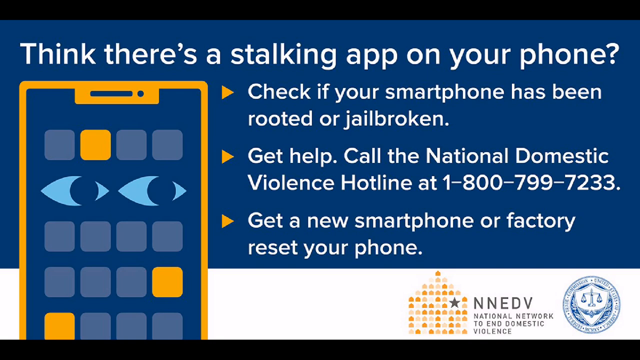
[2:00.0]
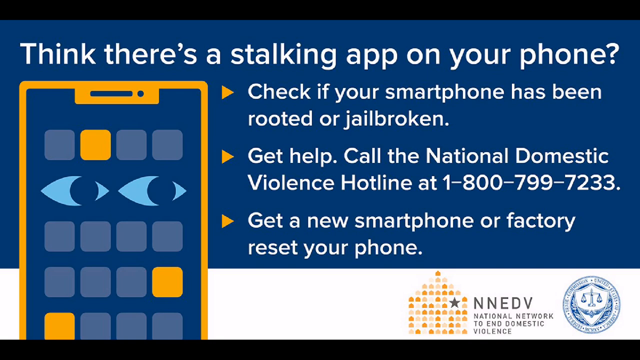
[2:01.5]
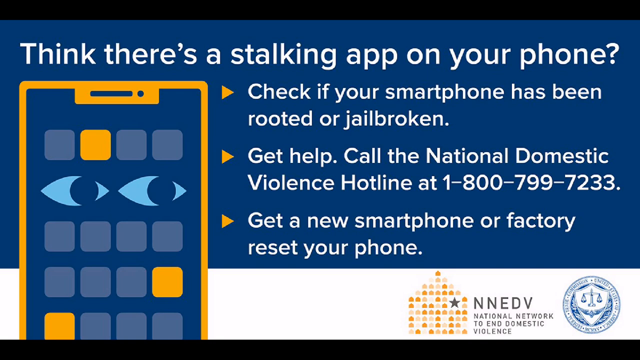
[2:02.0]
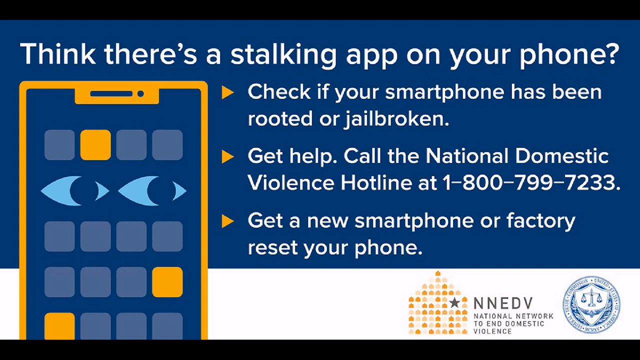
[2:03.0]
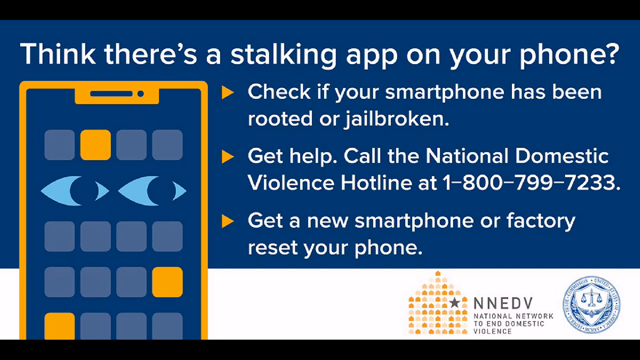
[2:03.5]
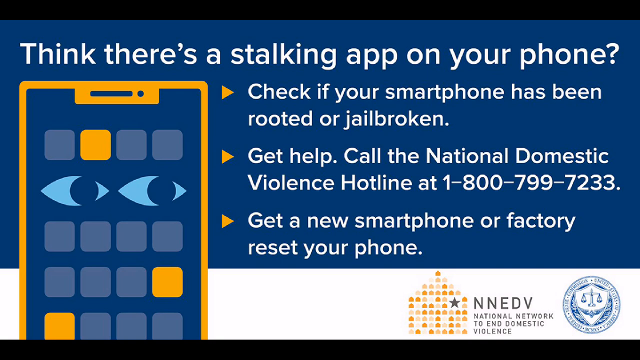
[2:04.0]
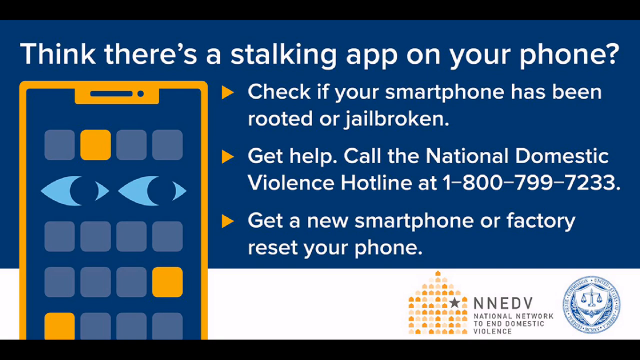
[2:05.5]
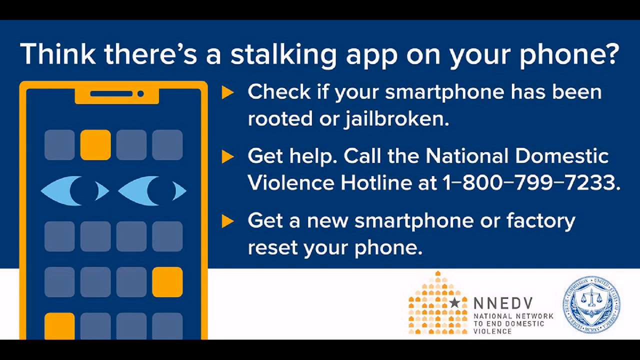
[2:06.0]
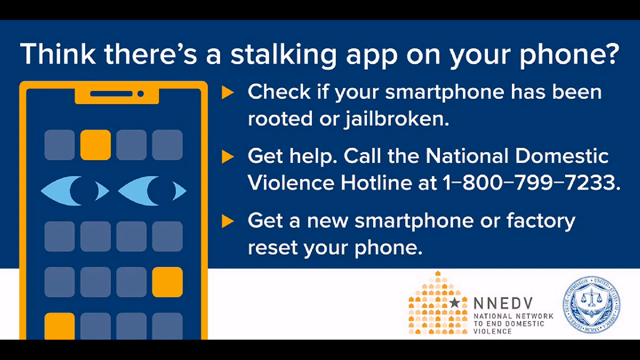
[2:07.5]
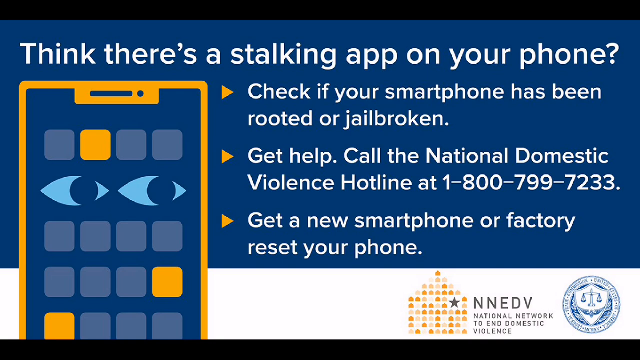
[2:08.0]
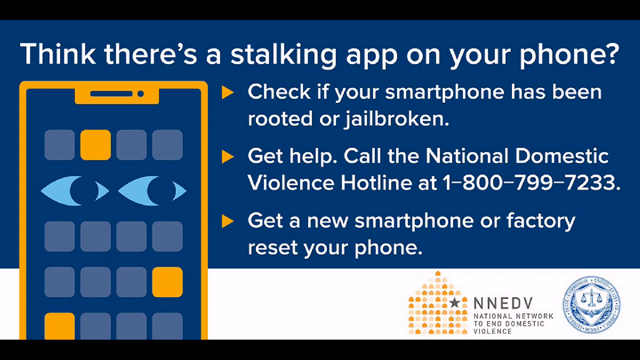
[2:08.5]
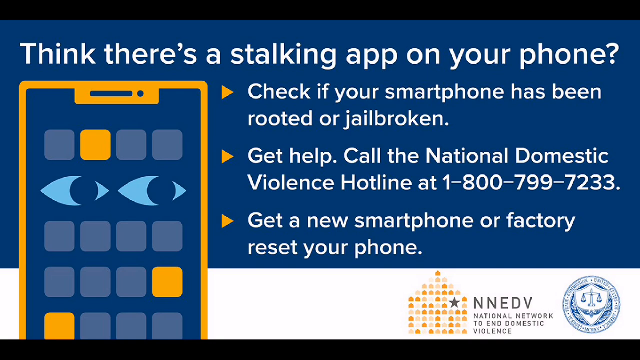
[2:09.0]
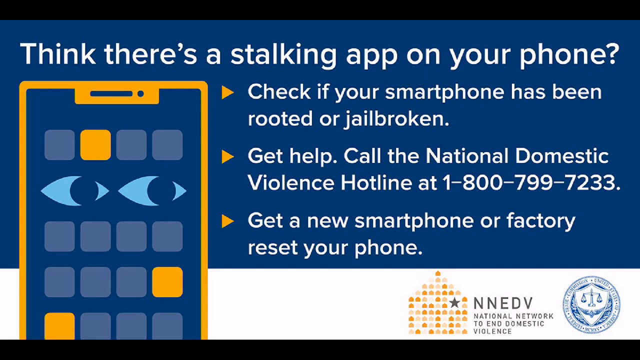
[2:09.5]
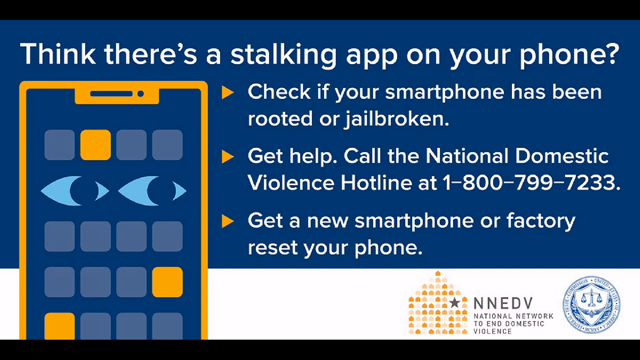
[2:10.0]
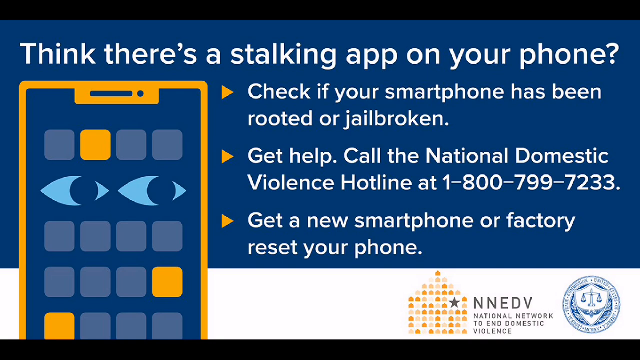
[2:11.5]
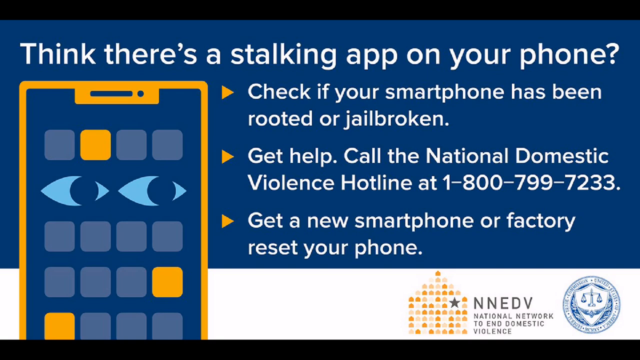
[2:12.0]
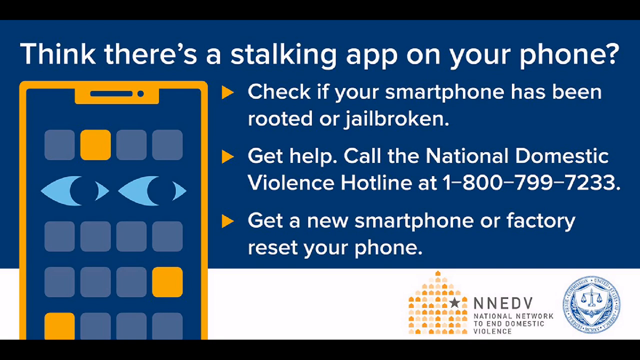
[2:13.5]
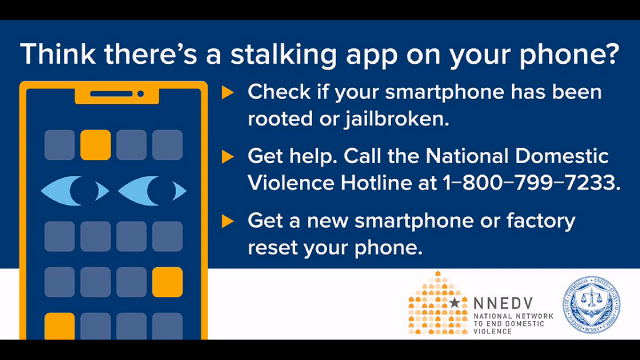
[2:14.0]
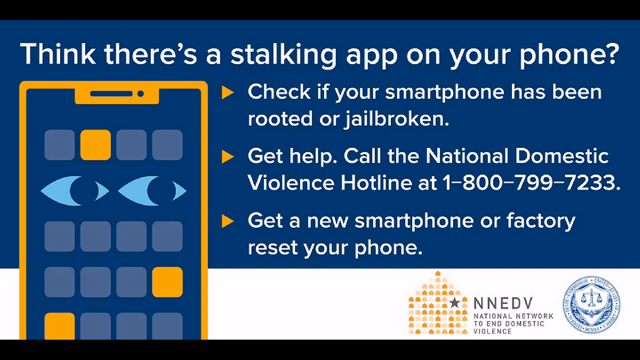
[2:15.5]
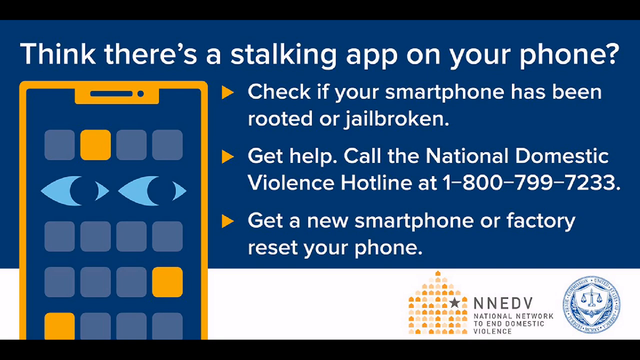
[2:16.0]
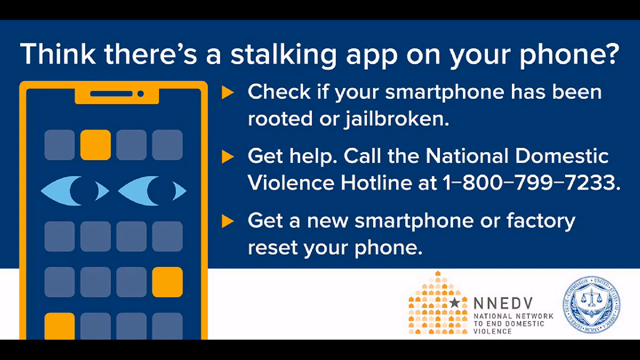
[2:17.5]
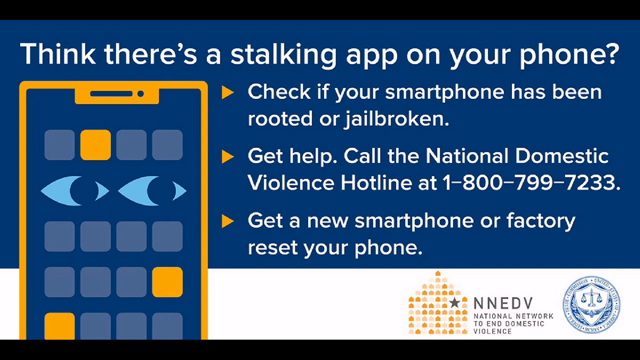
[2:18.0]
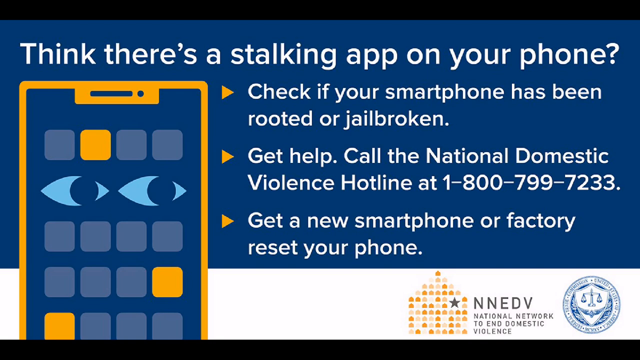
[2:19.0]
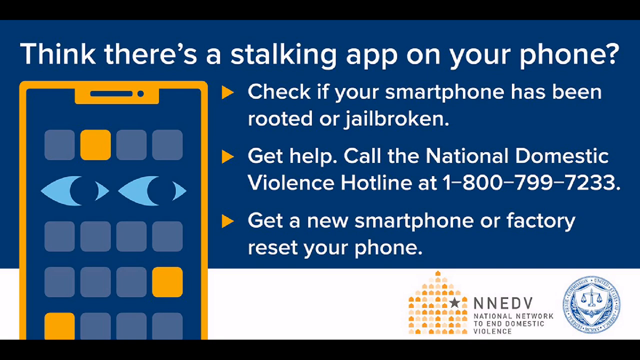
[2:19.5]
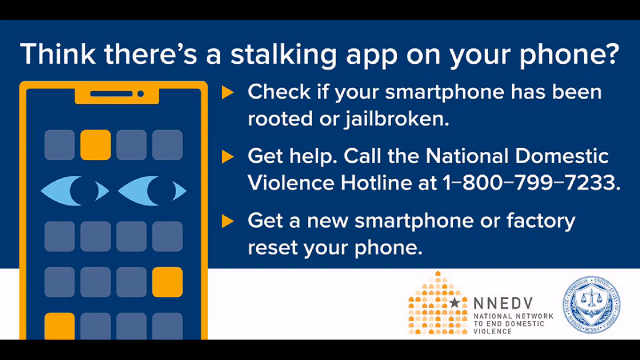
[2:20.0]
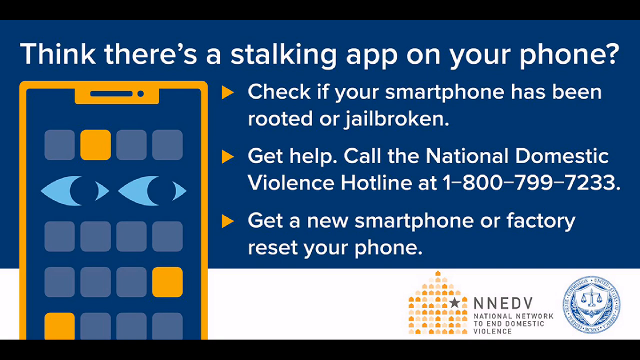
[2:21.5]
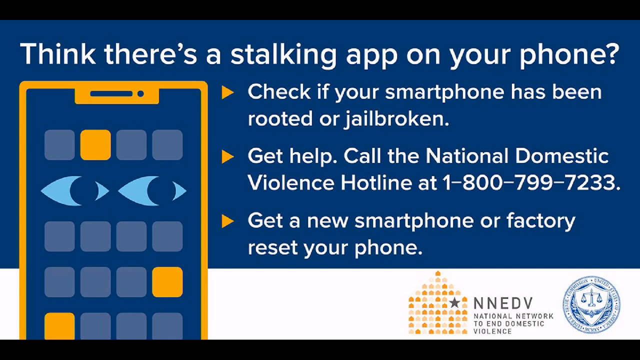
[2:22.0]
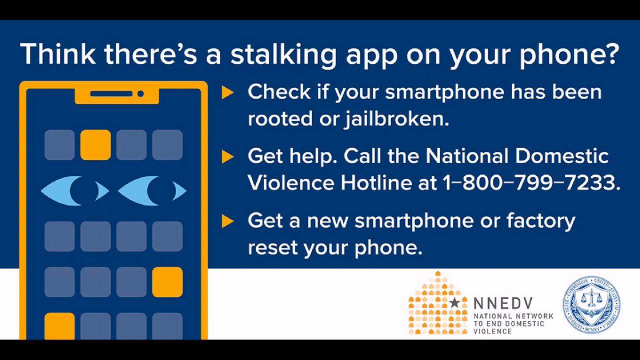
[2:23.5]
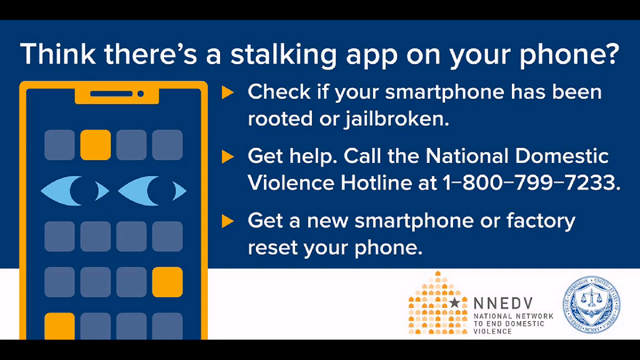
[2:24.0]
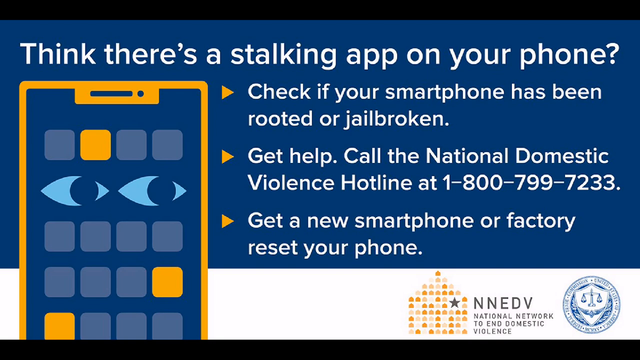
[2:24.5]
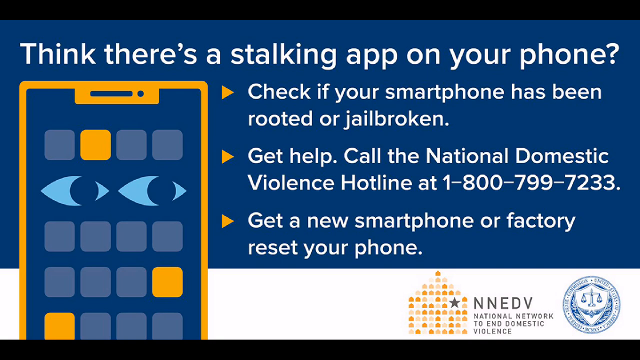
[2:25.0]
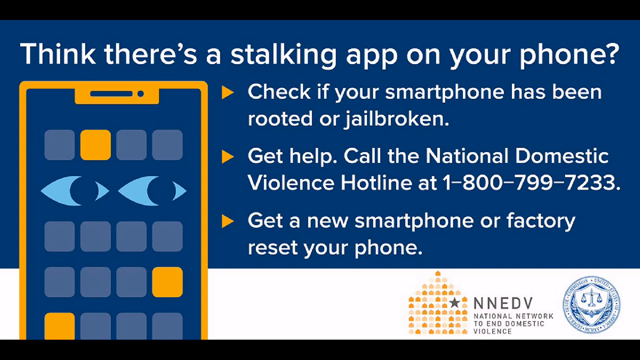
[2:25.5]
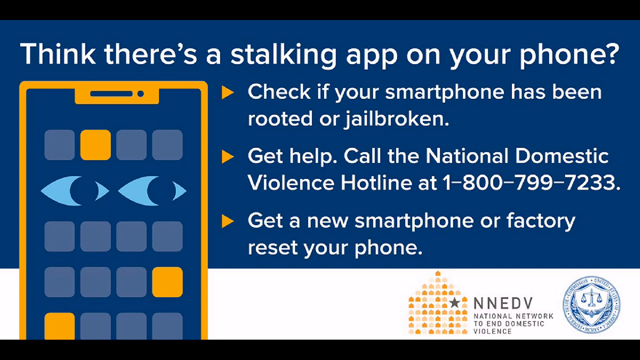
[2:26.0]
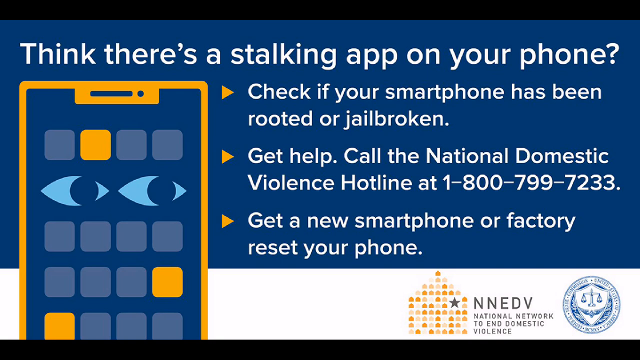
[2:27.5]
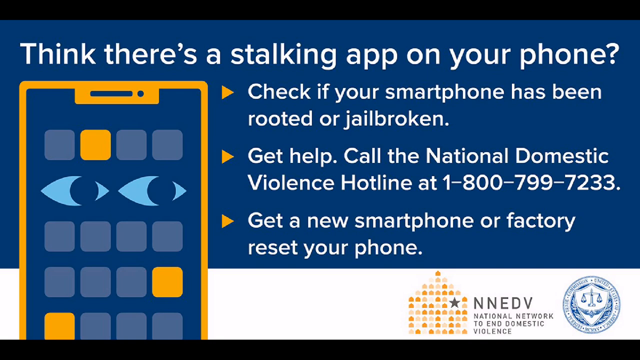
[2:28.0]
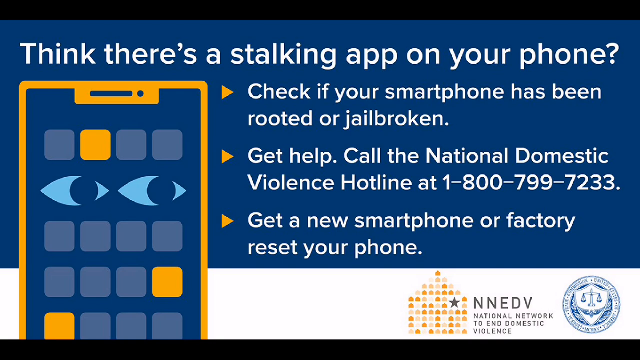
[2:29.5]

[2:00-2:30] More details on how to tell are shown, with an image of a phone with eyes on it and what may be apps in blue and yellow, alongside a checklist. A hotline for National Domestic Violence is given, along with the advice "Get a new smartphone" and to factory reset the phone. The screen stays the same without moving.